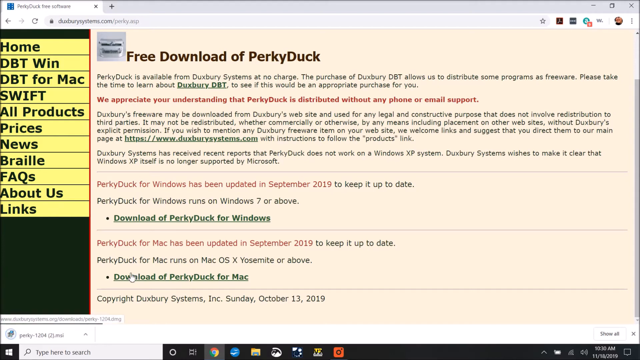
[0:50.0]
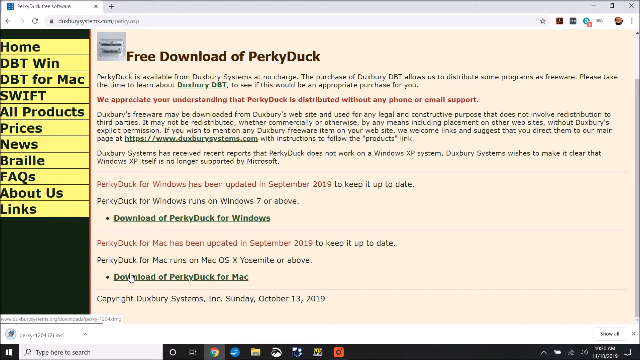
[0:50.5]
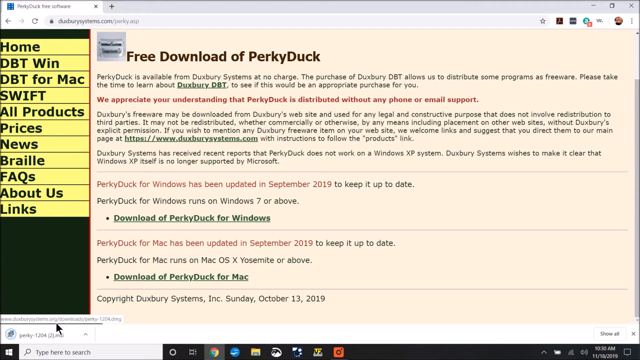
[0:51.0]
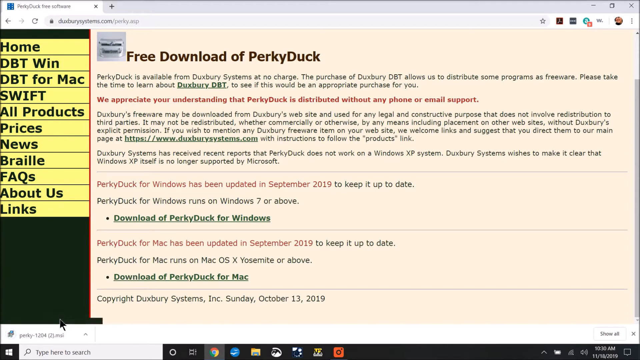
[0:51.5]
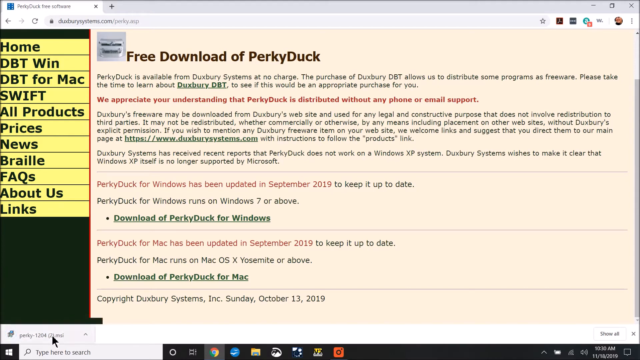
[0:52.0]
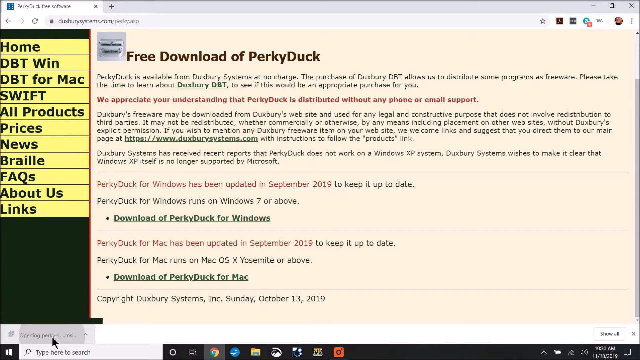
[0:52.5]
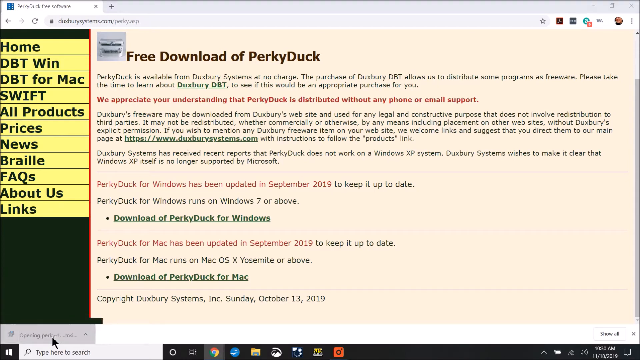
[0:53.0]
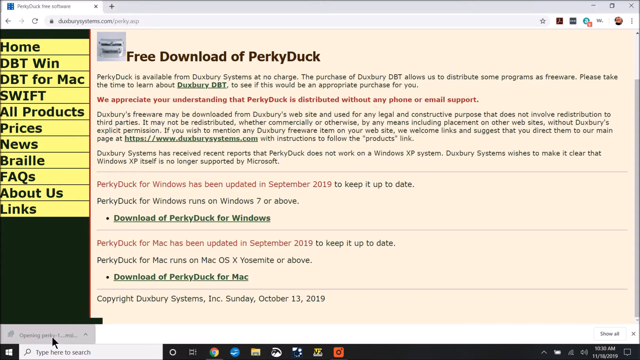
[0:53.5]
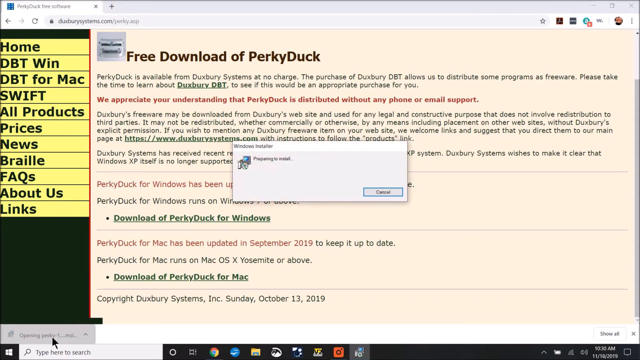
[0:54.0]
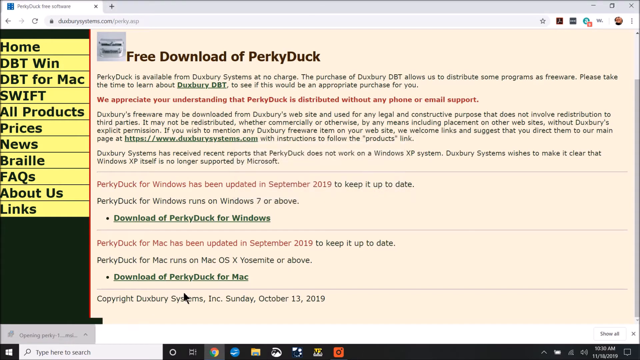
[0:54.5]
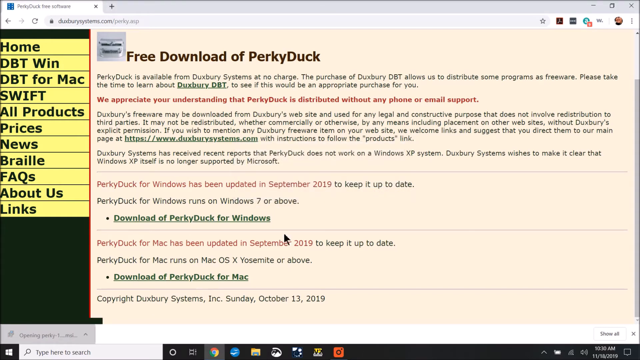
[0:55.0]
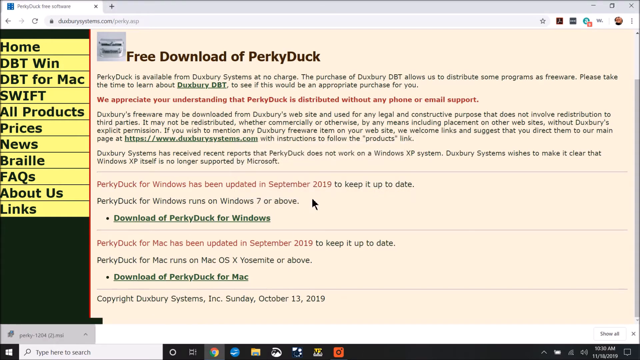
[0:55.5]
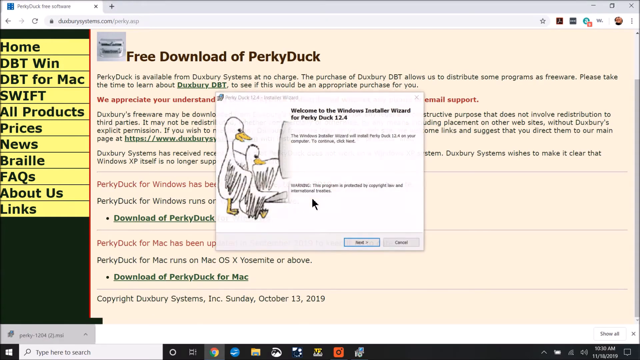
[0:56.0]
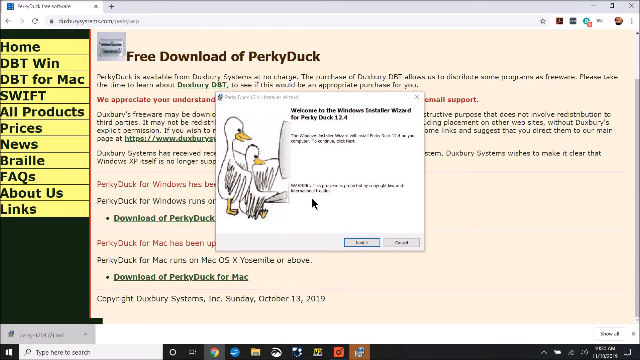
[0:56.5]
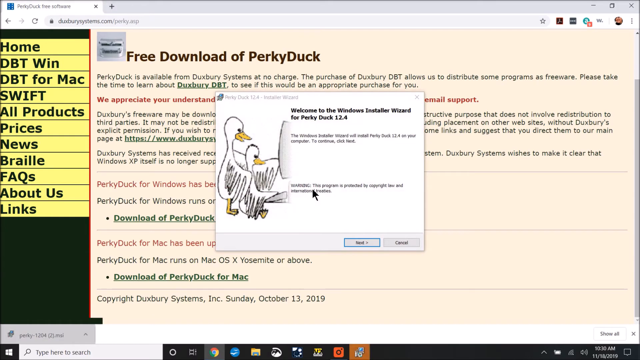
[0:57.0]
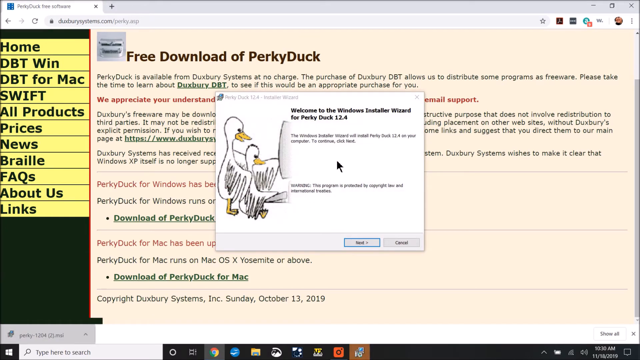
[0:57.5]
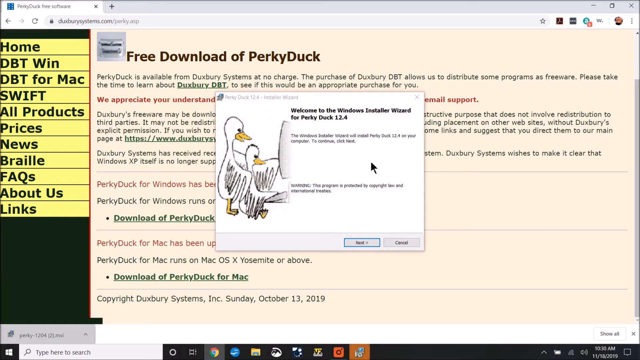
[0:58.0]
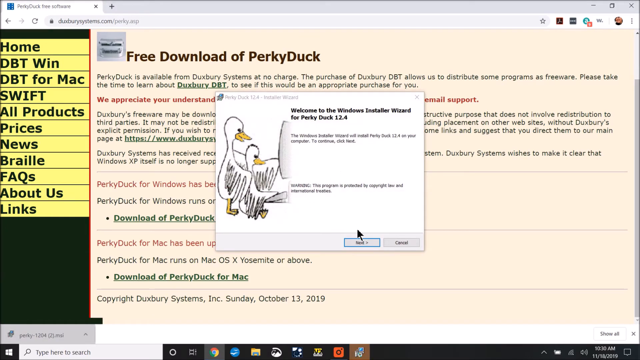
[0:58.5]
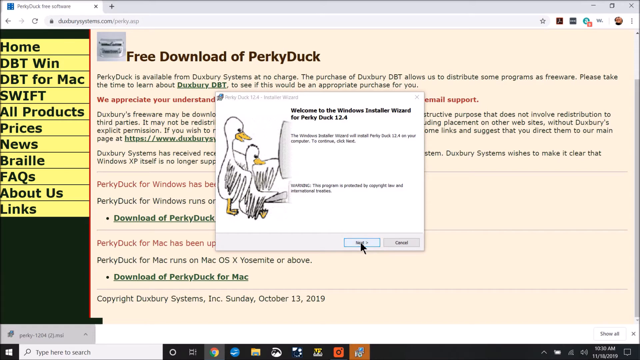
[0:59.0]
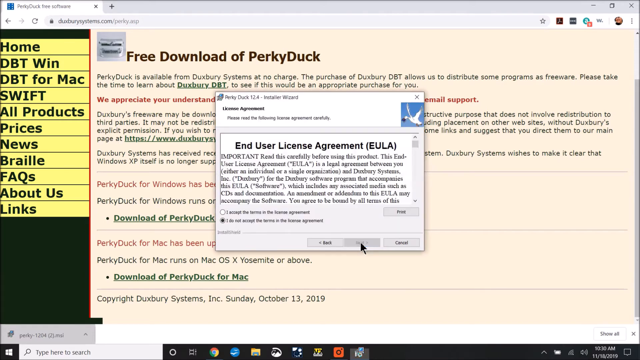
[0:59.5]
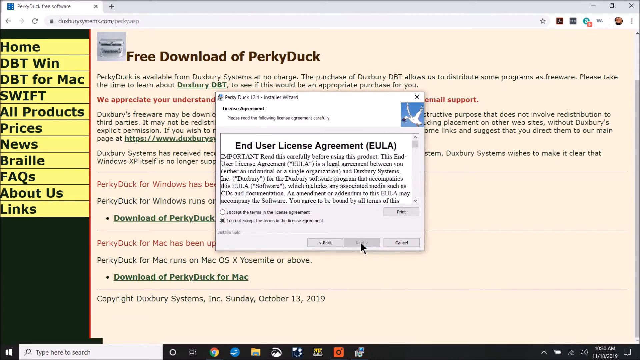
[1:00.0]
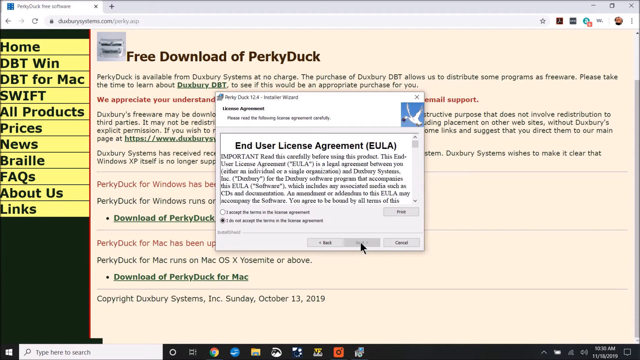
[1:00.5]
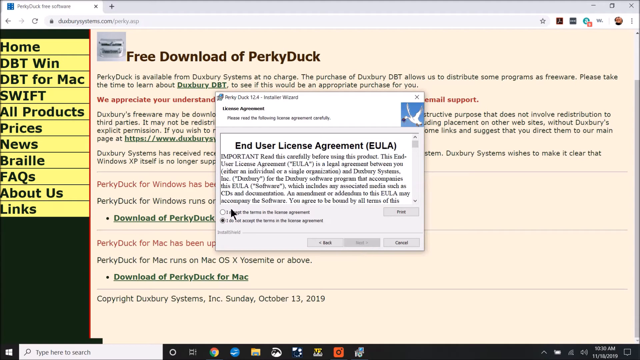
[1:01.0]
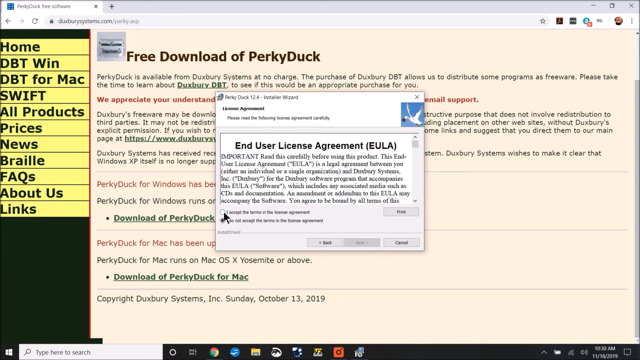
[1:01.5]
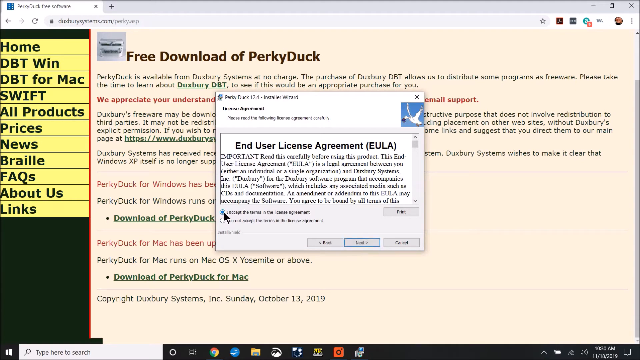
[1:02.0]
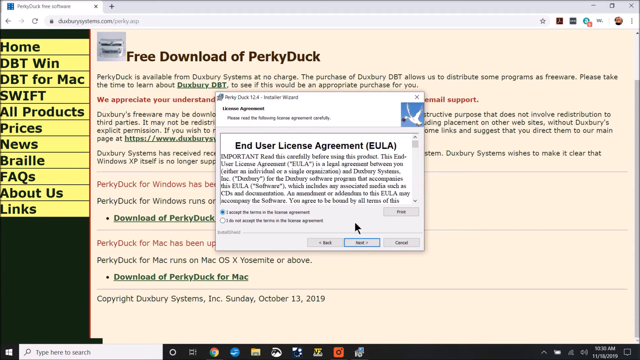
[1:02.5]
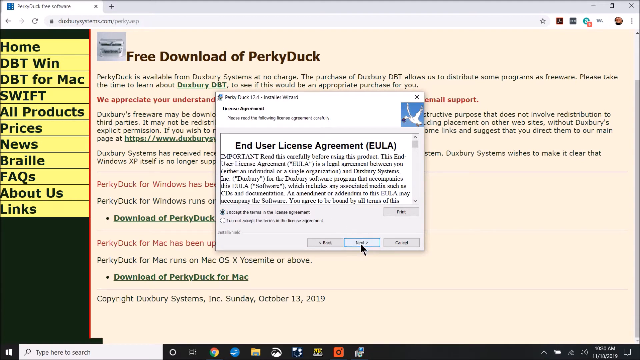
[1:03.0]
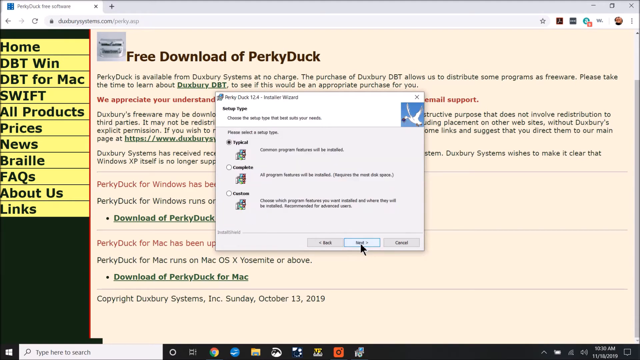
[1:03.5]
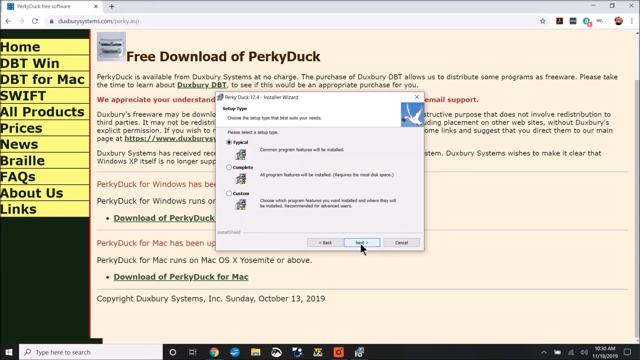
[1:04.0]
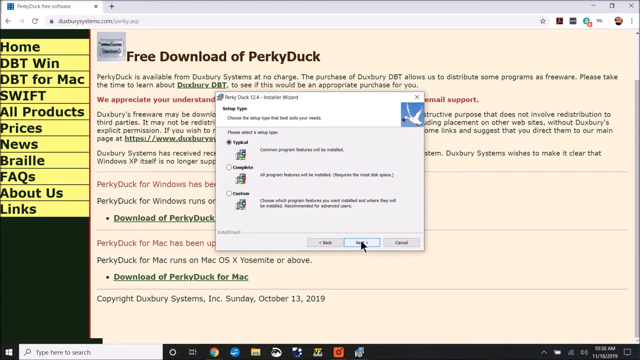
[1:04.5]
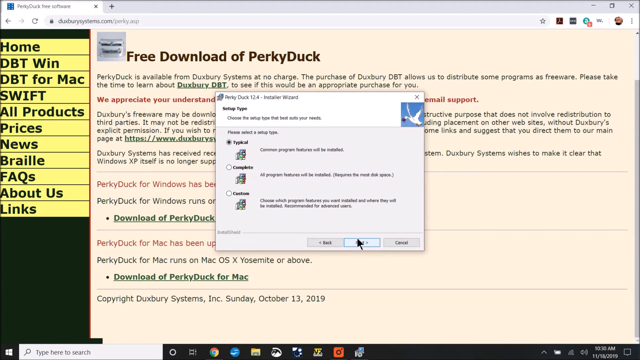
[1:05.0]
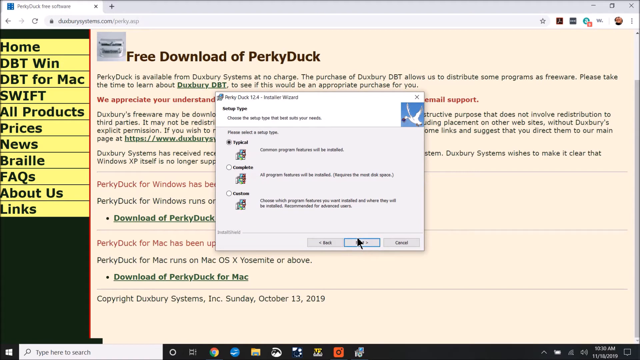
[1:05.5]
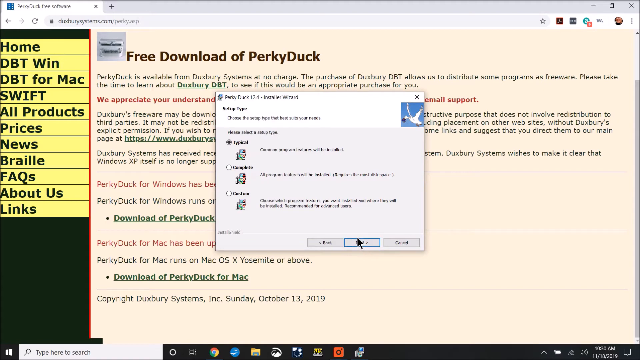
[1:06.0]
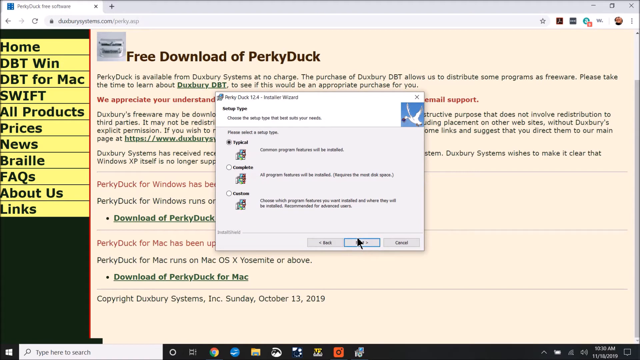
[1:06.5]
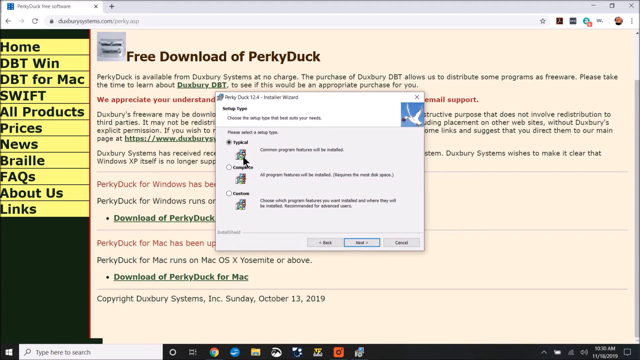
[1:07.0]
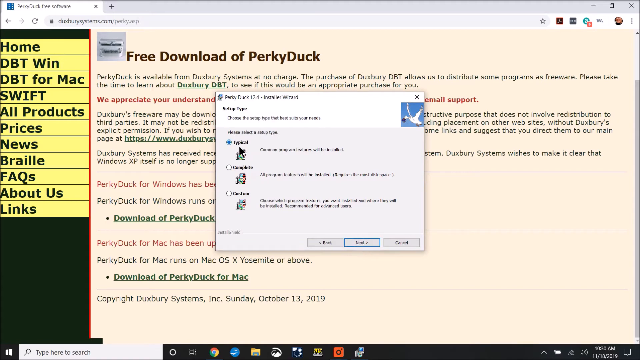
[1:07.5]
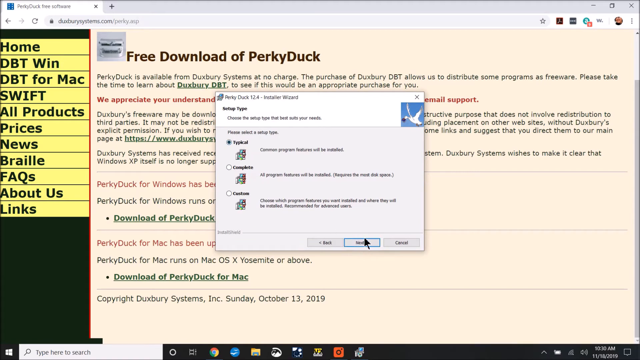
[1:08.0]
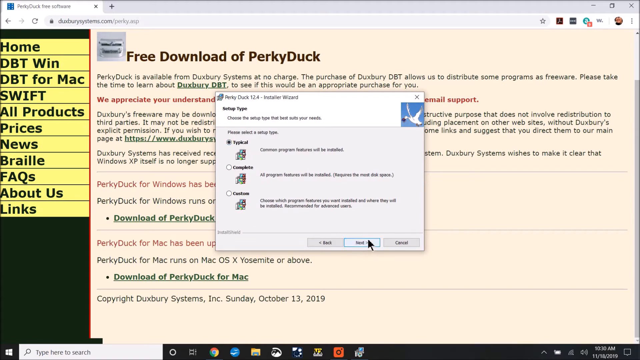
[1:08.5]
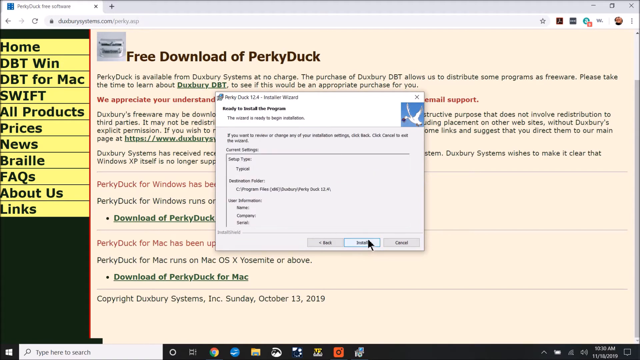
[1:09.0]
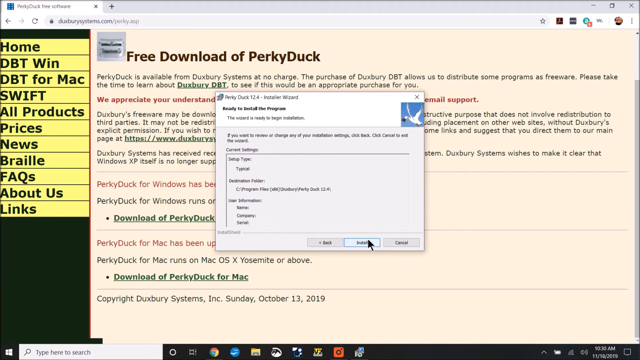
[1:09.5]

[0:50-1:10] The cursor moves around a bit before clicking on the downloaded installer. A pop-up appears in the middle of the screen with bold text at the top reading "welcome to the Windows Installer Wizard for Perky Duck 12.4", followed by text saying "the Windows Installer Wizard will install Perky Duck 12.4 on your computer. To continue, click next." At the bottom is a warning about copyright. On the left is an image of two ducks: a big duck uses its right wing to pat or hold the shoulder of the other duck, which is using its wings to use a computer. The user moves the cursor down and clicks Next. The EULA appears with standard license text and the options to accept or not accept the license agreement; the user selects I accept and clicks Next again. Three setup types are then shown: Typical, which is pre-selected and says "common program features will be installed"; Complete below that; and lastly Custom, whose description ends in bold text reading "recommended for advanced users". The user hovers over Typical and then clicks Next.